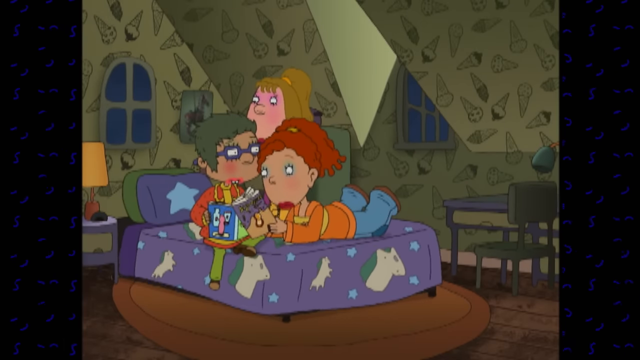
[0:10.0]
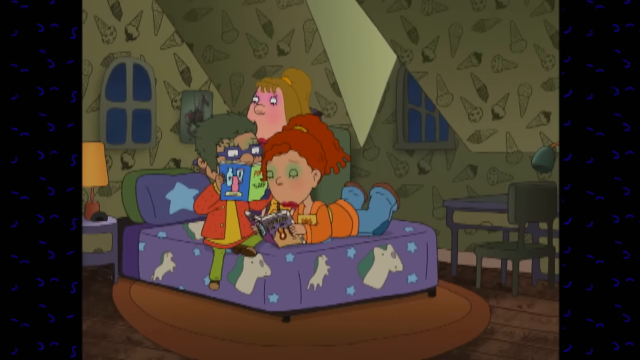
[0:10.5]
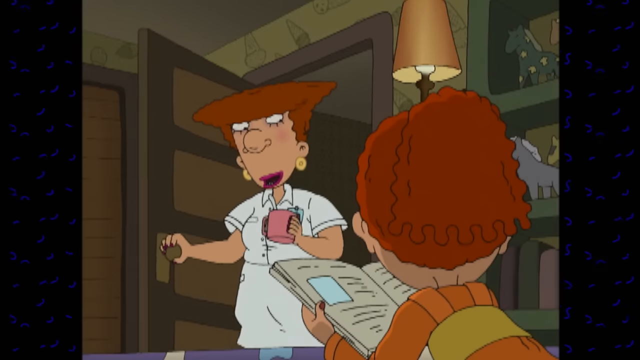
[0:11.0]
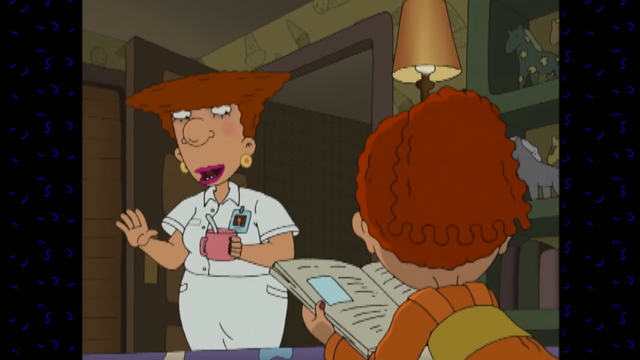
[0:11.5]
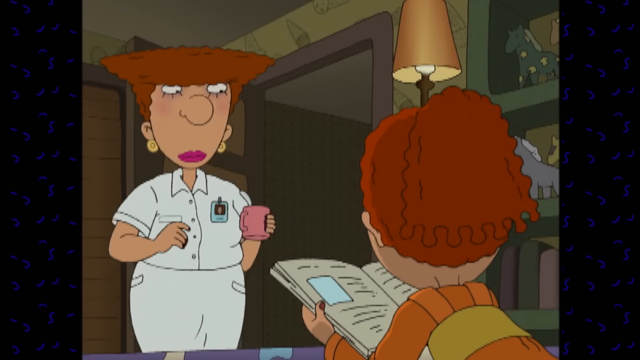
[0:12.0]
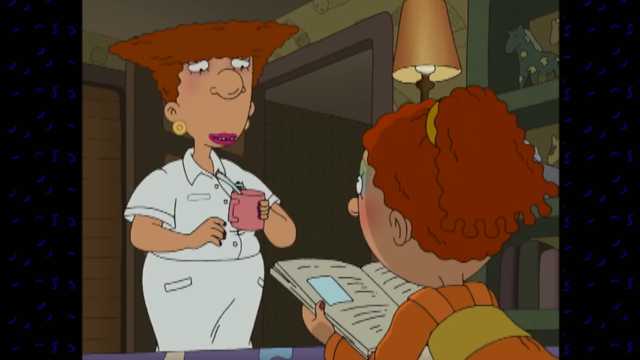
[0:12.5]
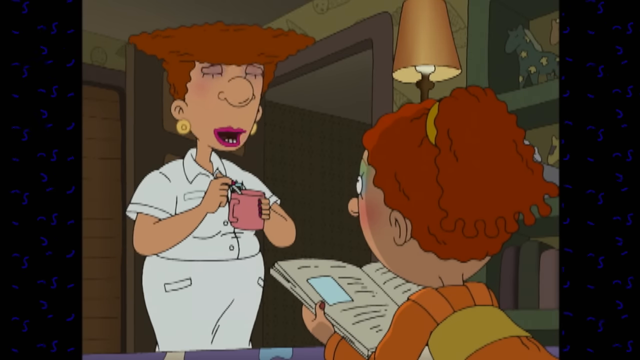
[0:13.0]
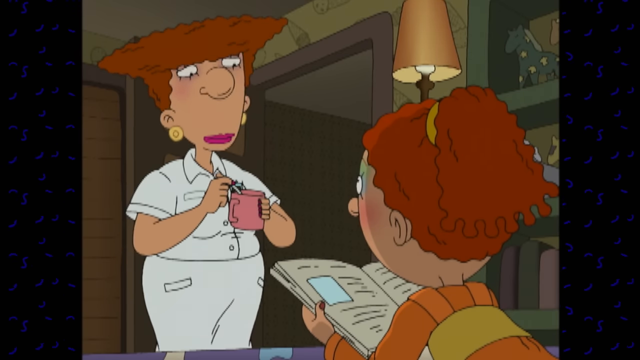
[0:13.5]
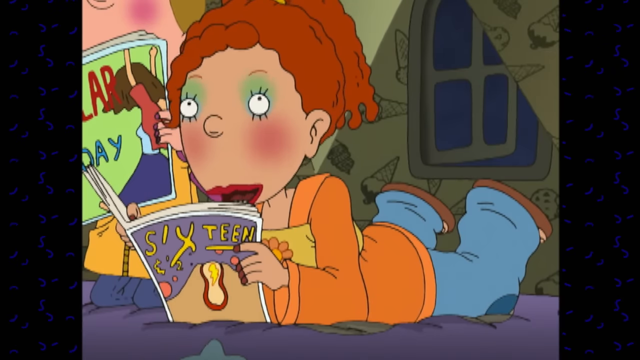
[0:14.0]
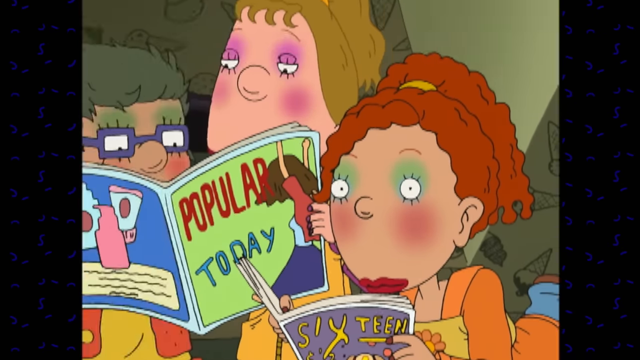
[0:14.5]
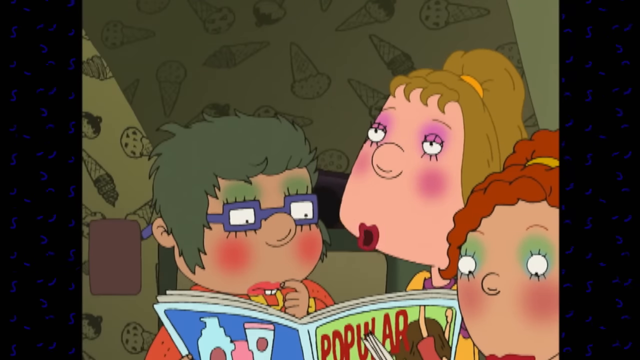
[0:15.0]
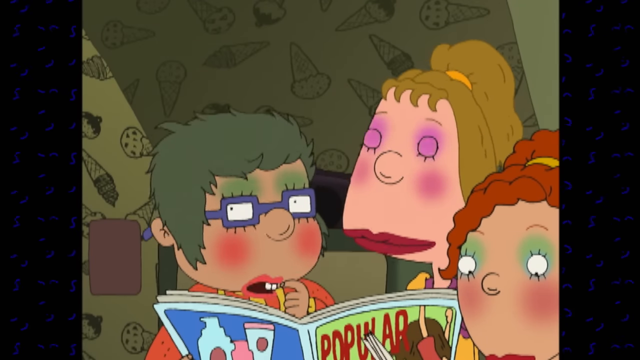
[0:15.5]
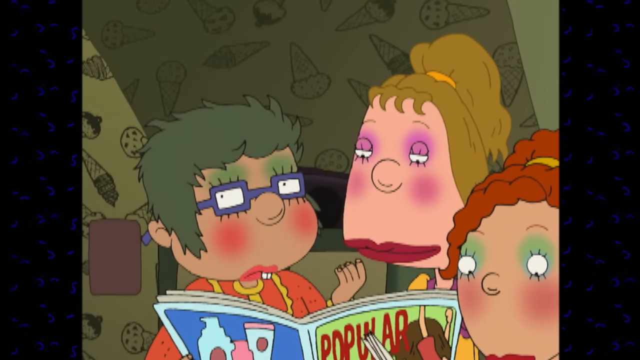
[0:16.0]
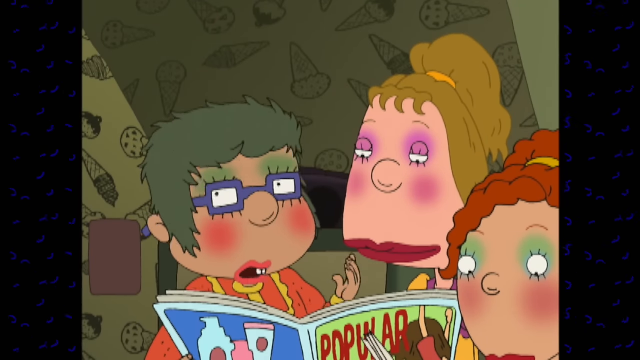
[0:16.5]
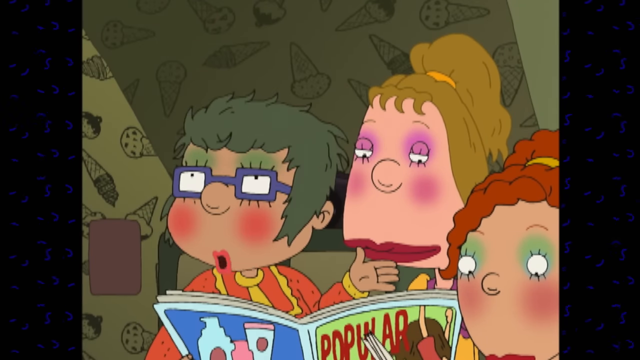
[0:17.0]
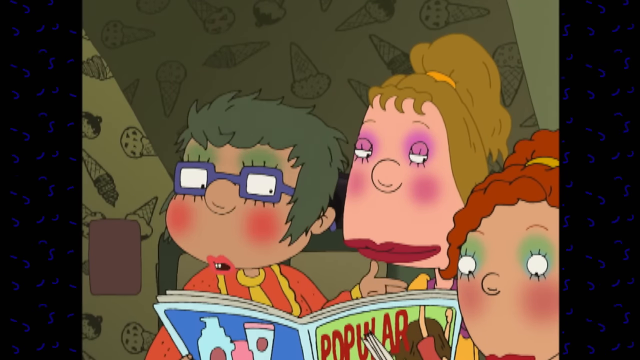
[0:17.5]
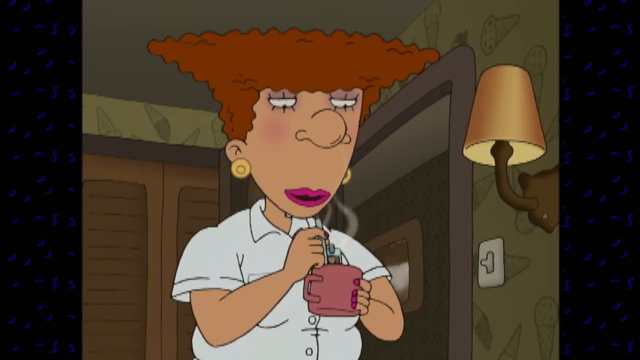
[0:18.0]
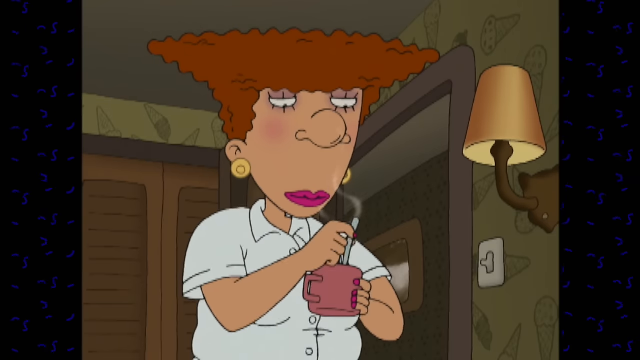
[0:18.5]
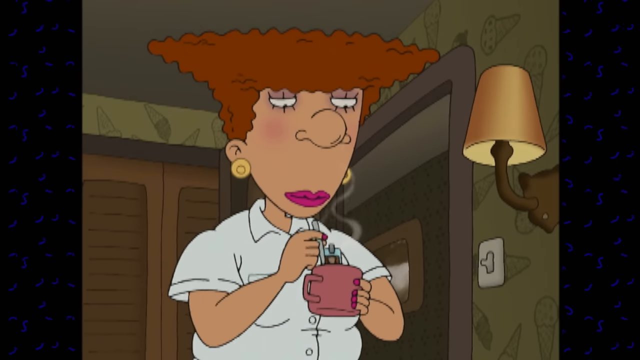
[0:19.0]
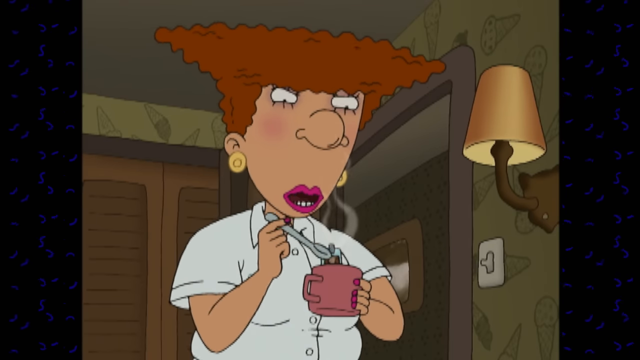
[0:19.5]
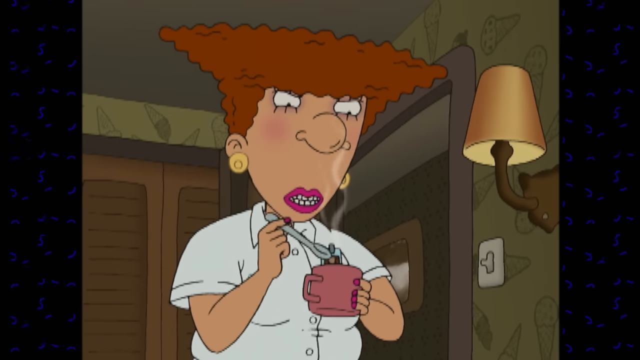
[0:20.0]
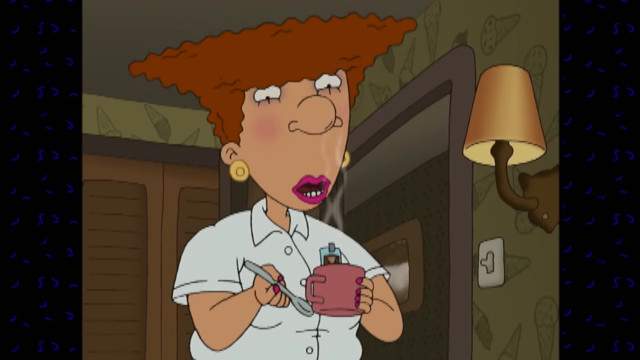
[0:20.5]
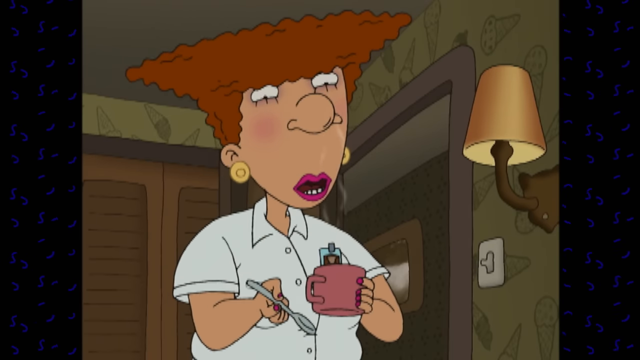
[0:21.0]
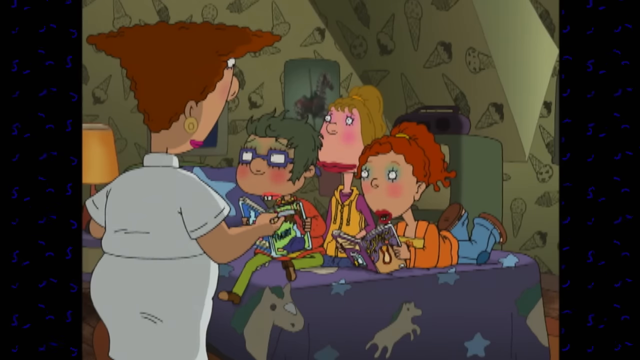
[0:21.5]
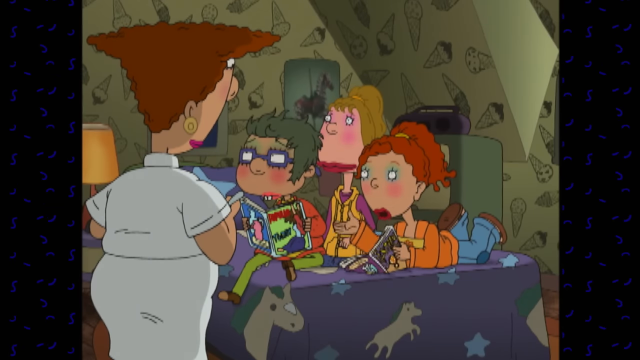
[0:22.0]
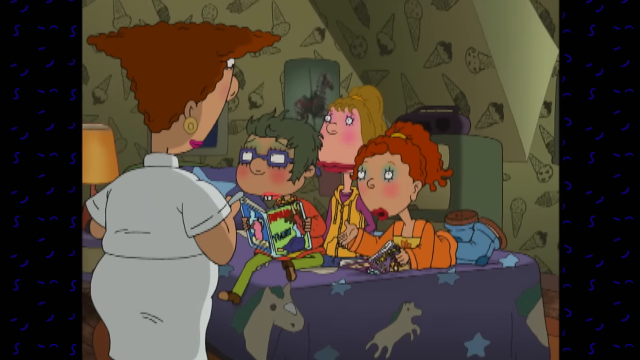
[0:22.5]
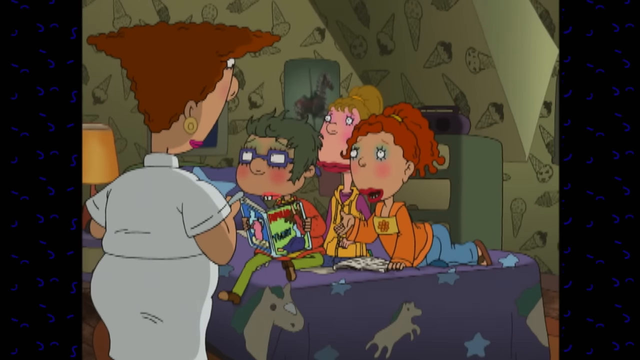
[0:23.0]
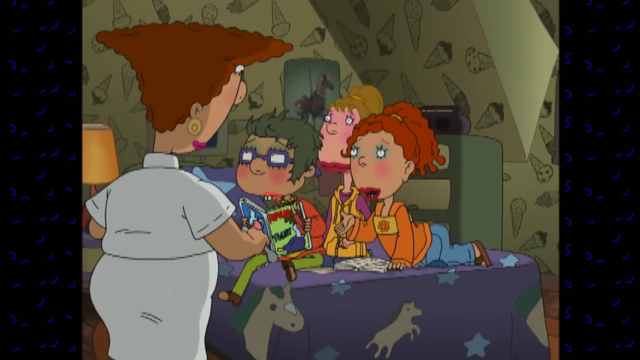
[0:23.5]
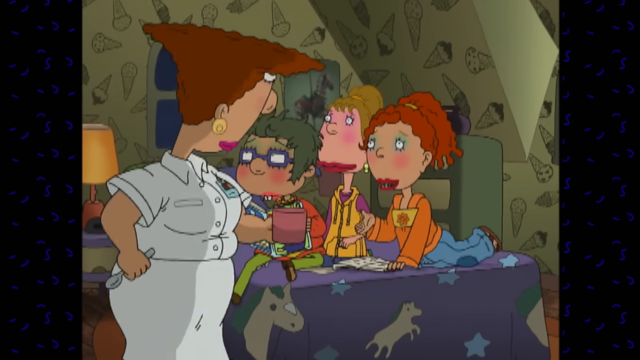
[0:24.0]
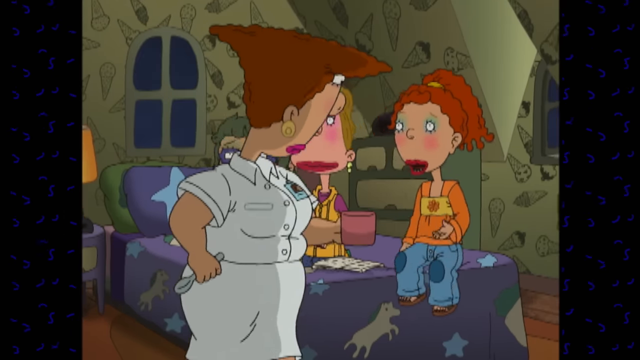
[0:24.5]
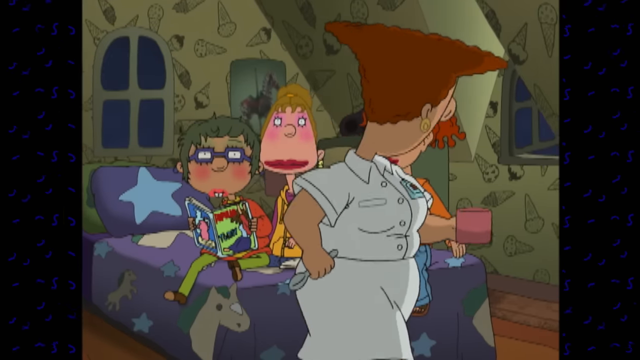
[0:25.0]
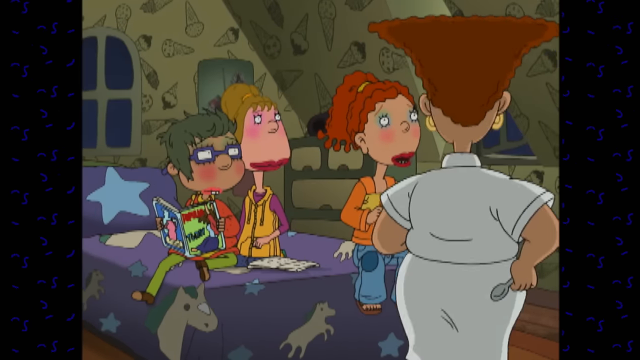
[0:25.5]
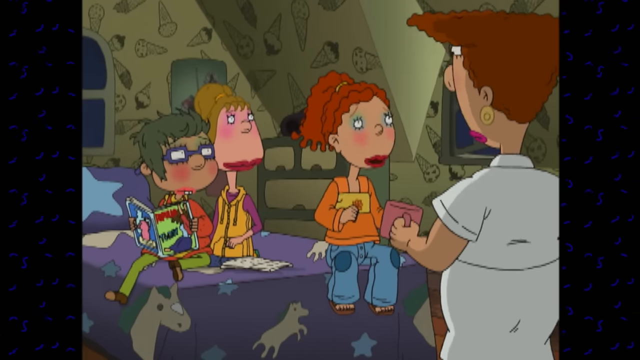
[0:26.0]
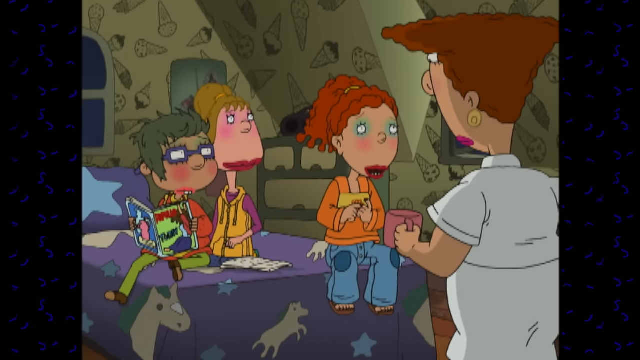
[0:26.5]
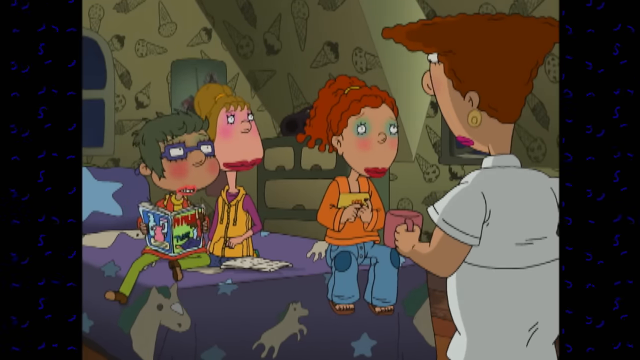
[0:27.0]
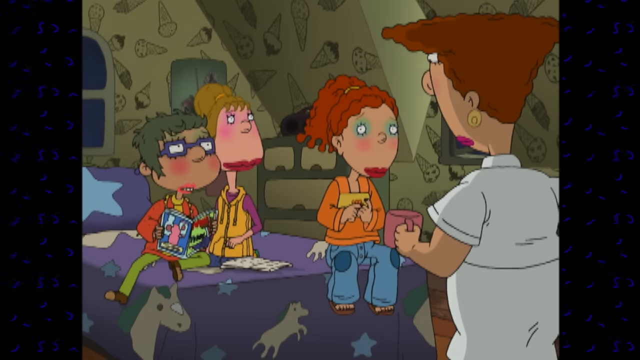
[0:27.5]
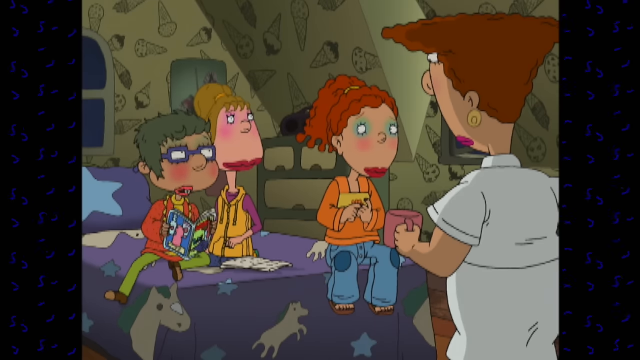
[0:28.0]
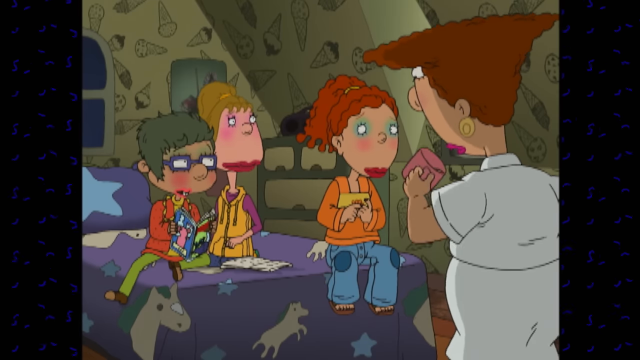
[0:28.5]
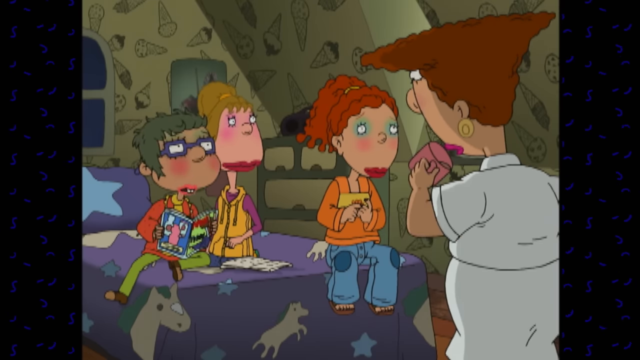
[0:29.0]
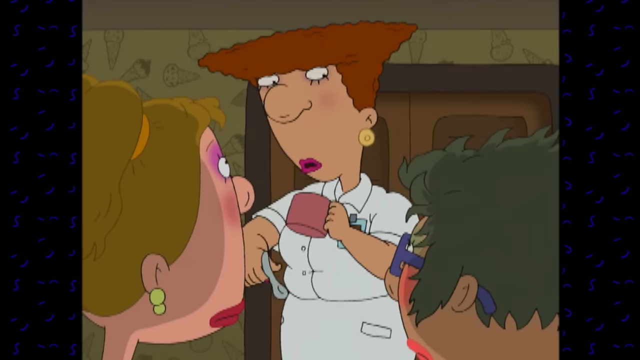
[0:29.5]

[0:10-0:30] The three of them are on the bed with books. An older woman comes inside to the bed holding a cup of coffee in her hand. She talks to the three kids, and they talk back and to each other. The woman looks almost like a nurse and has her name on a badge on her left-hand side, but the kids do not seem worried. The room has ice creams on the walls and looks like an attic, with small windows and a really low ceiling. It is a bedroom with just a bed, a desk and a bedside table, and not much else.